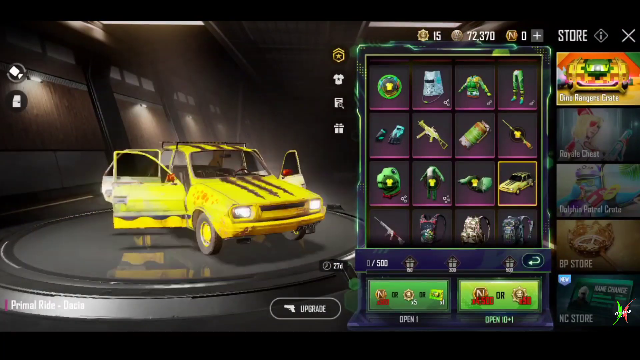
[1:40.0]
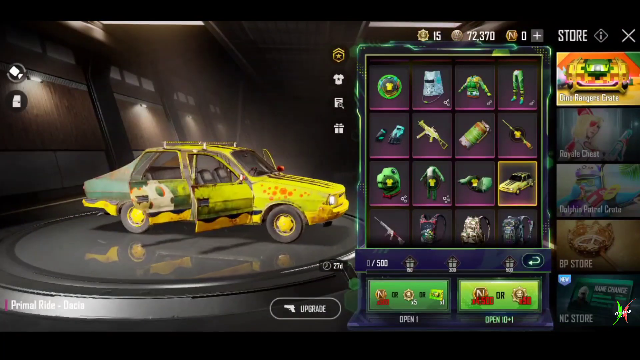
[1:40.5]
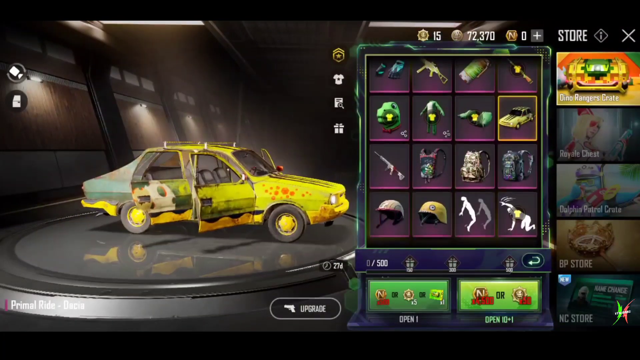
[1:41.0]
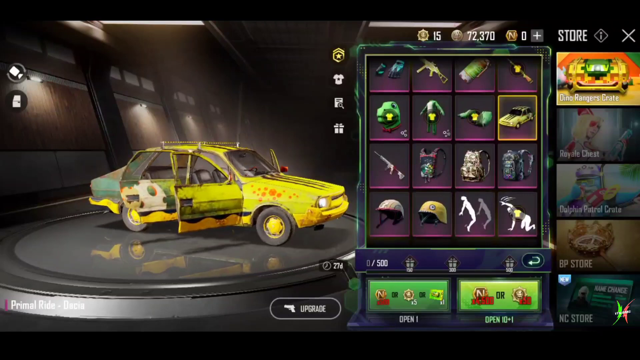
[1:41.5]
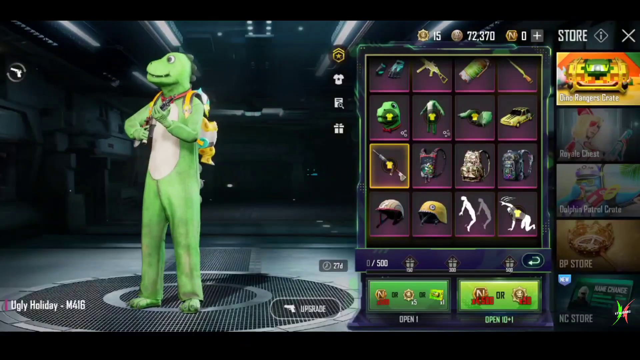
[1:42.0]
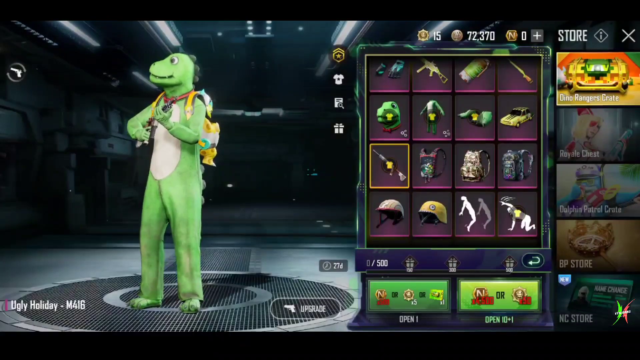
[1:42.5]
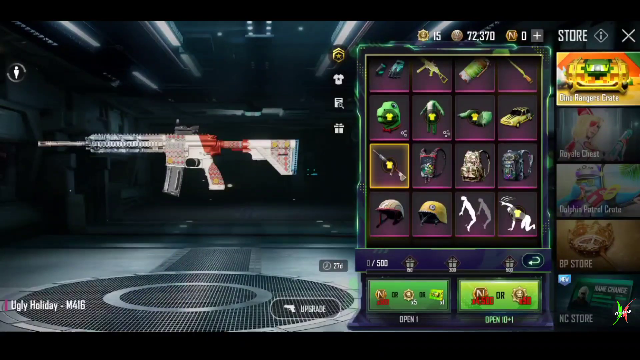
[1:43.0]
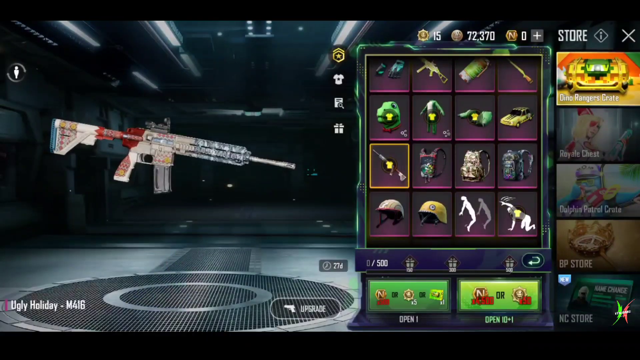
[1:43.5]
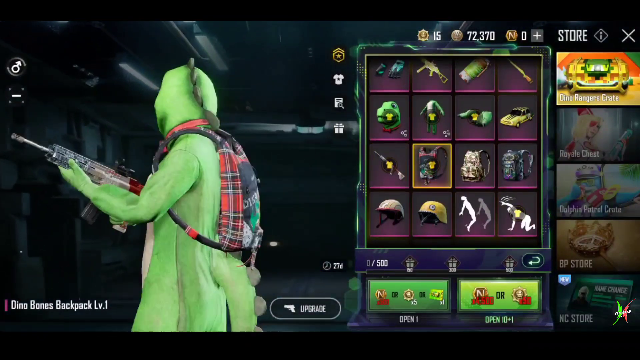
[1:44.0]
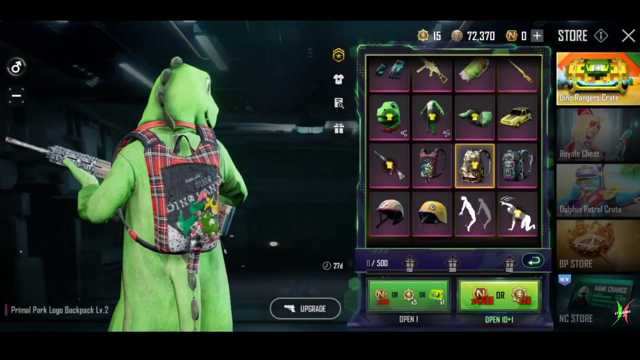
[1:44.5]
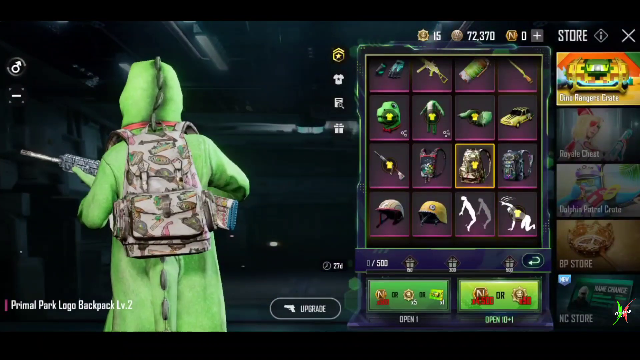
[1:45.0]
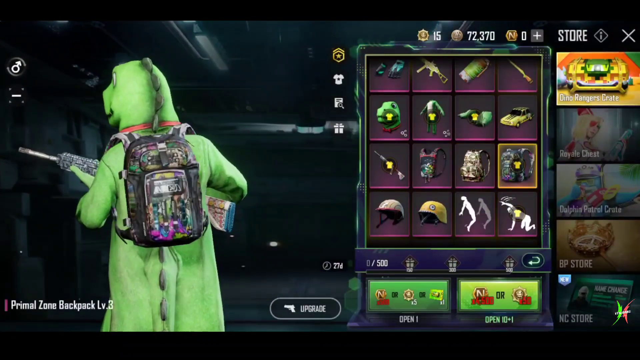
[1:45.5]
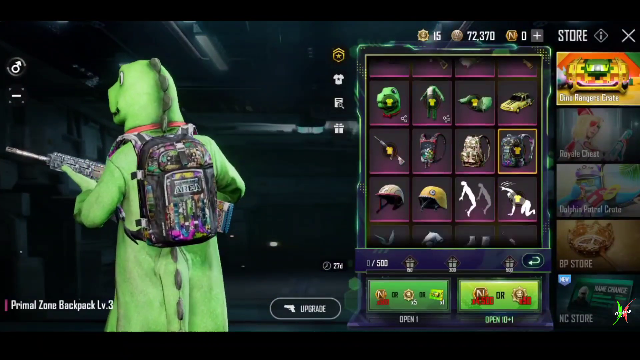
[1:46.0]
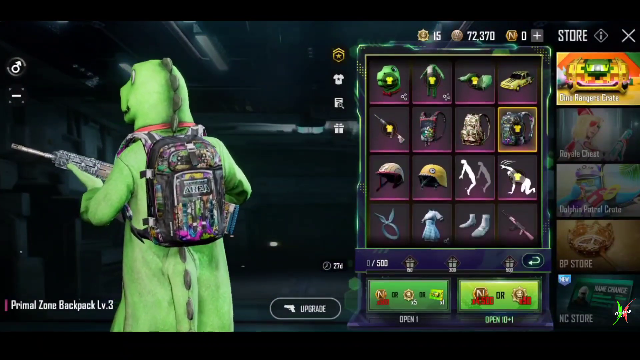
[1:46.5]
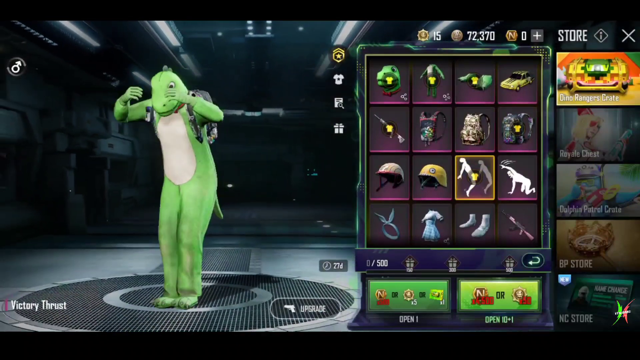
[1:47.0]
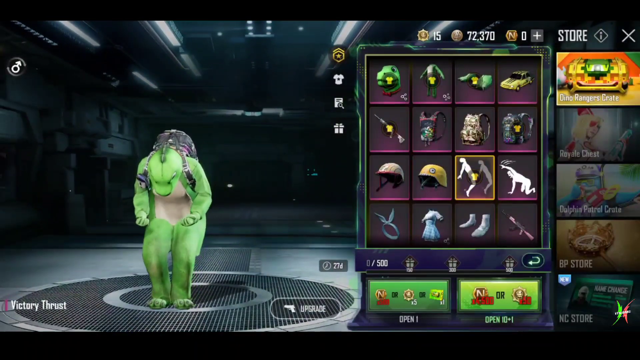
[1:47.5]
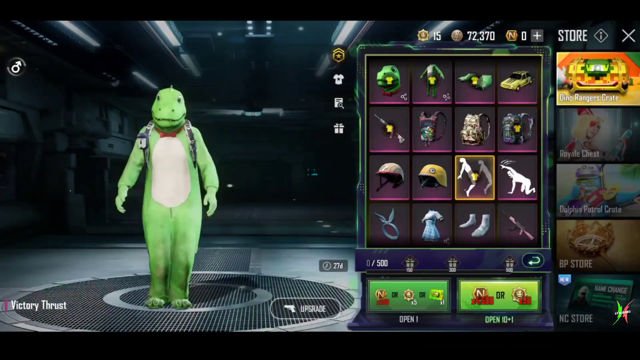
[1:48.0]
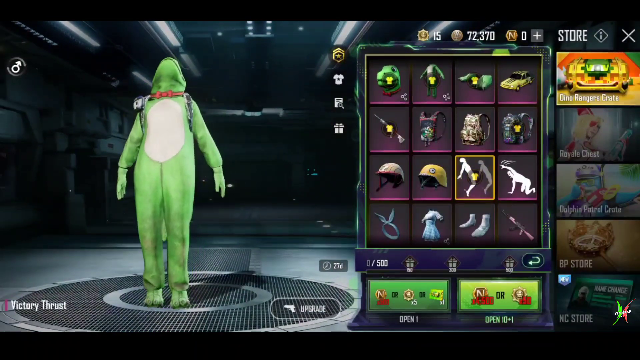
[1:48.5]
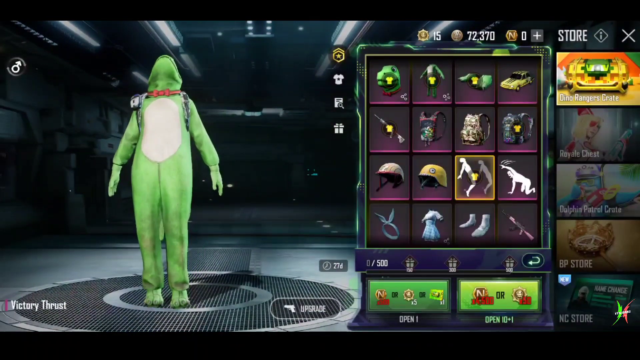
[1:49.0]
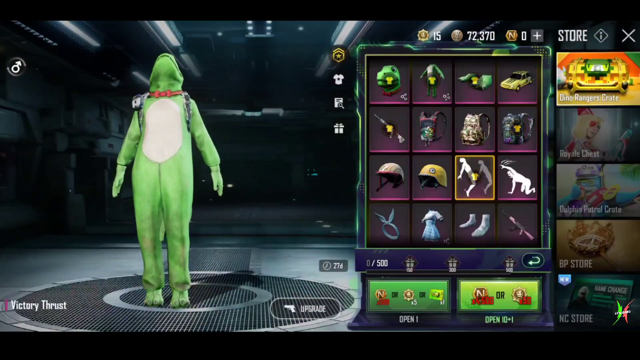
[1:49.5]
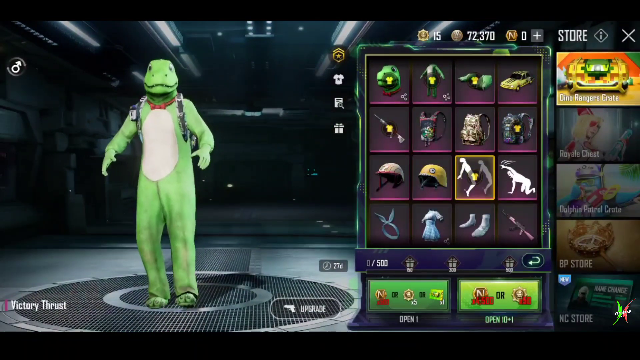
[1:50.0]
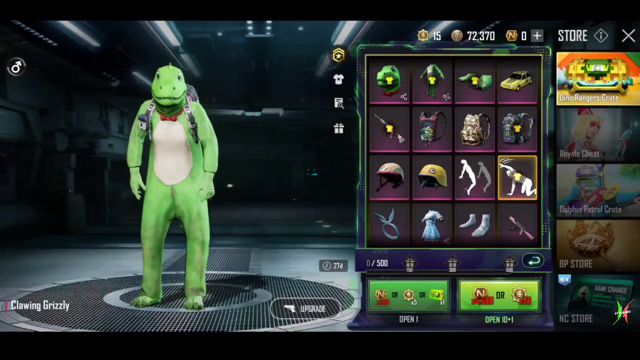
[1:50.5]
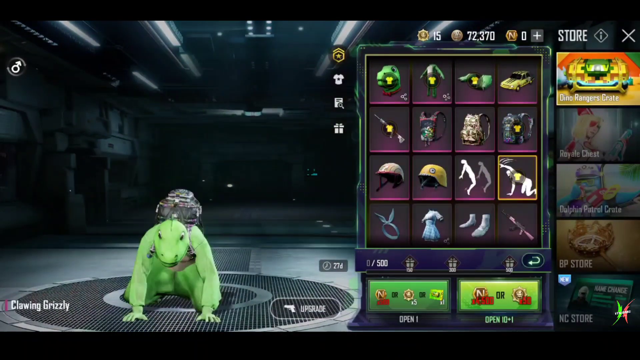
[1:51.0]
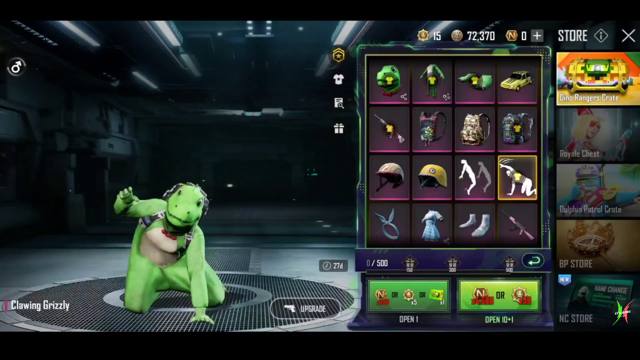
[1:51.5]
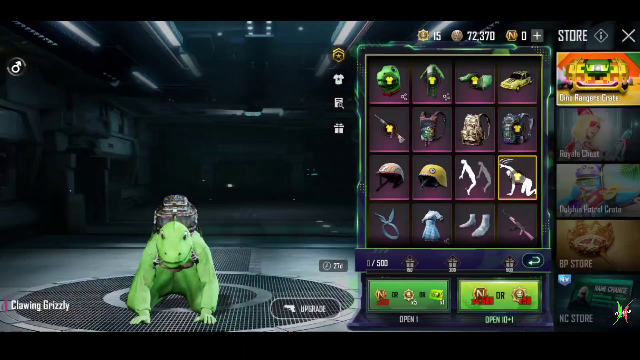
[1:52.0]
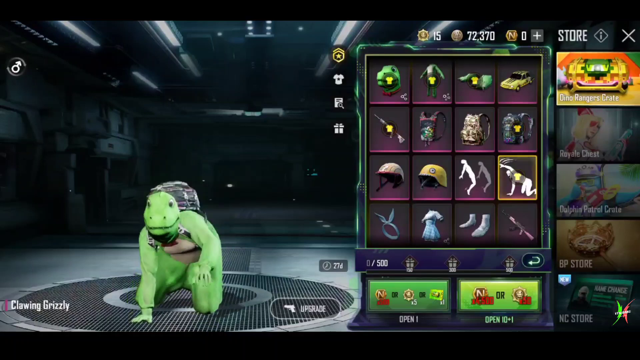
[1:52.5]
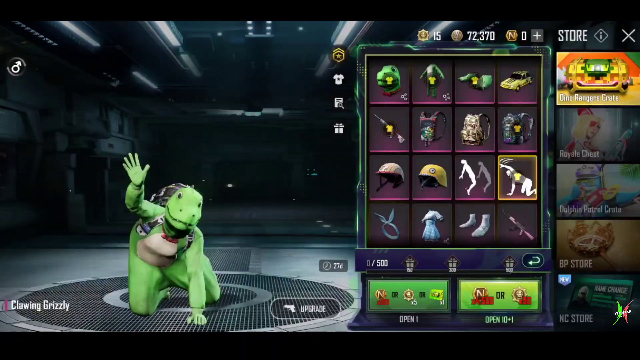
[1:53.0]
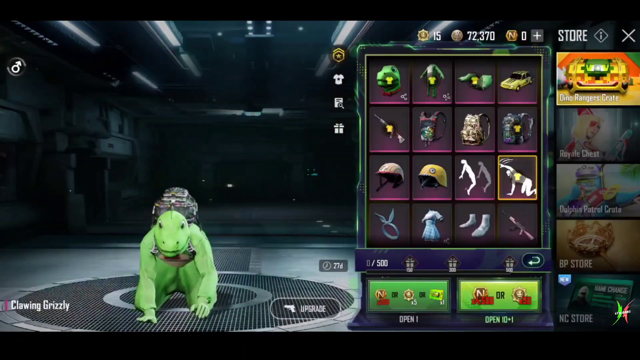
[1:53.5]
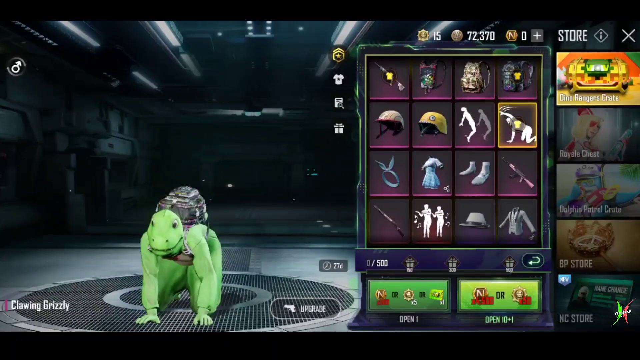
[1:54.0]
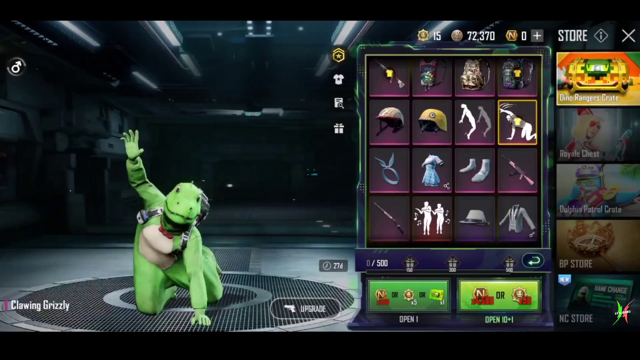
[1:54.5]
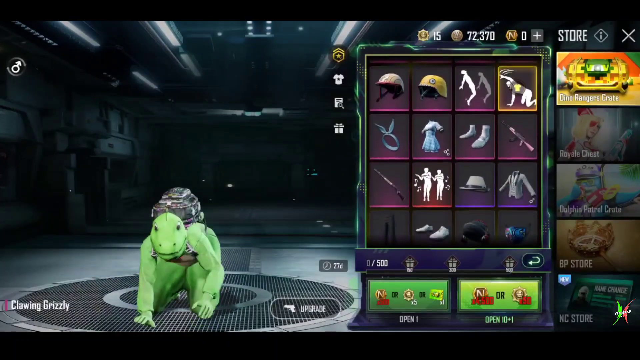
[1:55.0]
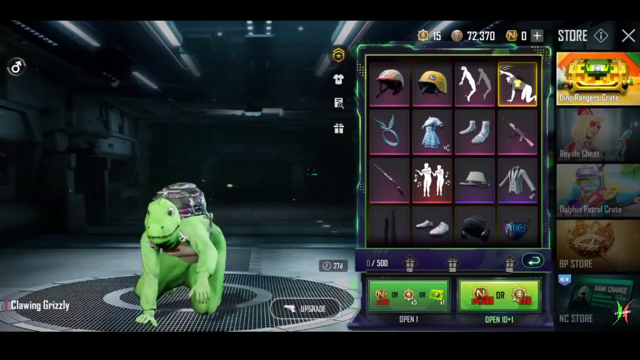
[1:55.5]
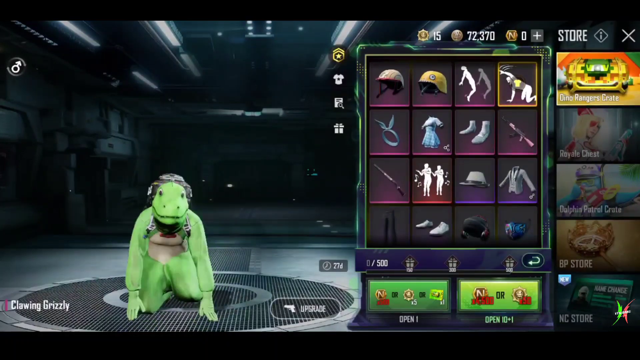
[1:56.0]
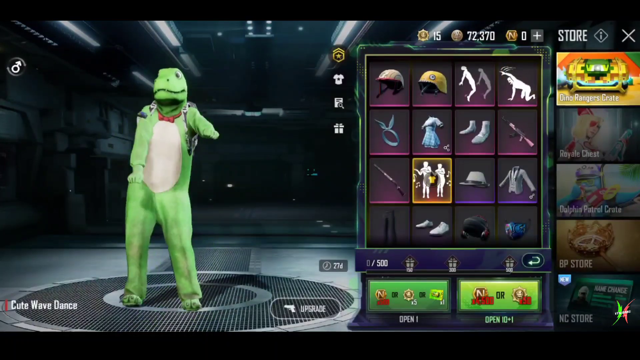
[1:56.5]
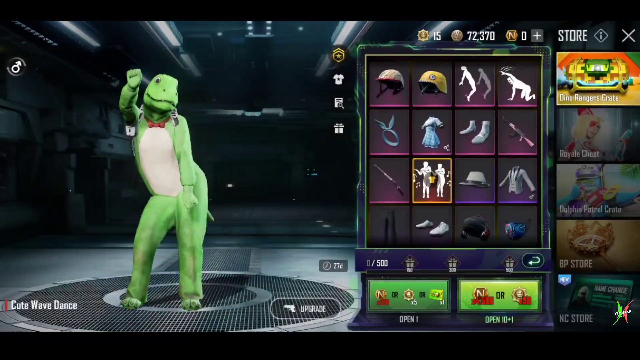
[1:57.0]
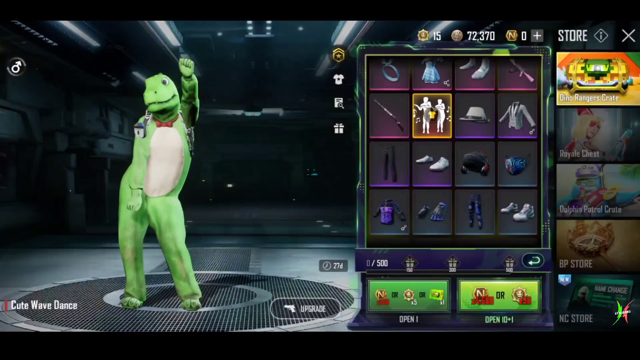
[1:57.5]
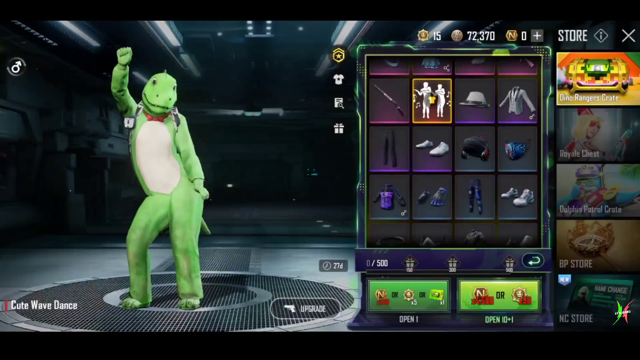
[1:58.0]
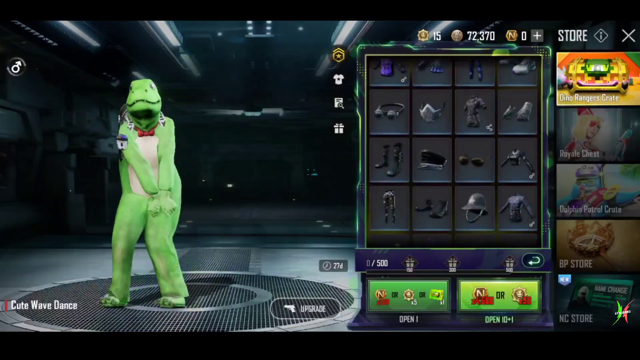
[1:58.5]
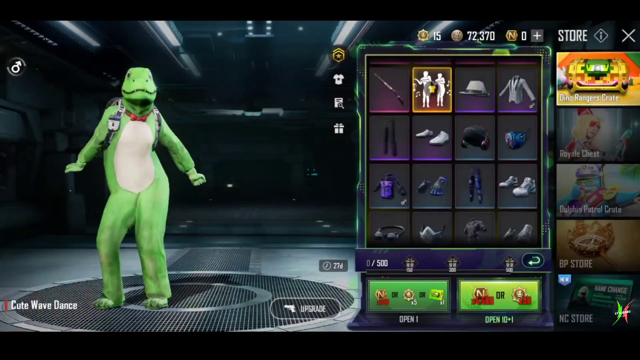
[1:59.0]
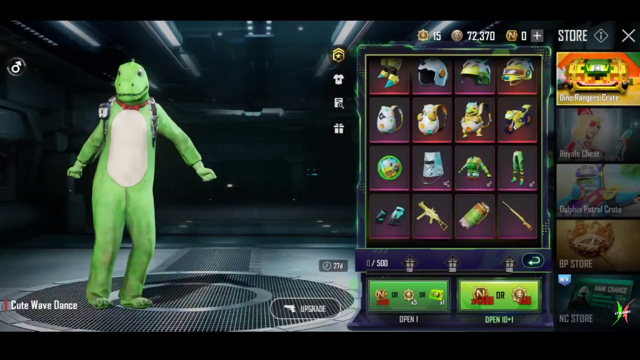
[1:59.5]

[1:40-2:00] A dinosaur car cosmetic is shown, a sedan with an egg on what appears to be the back door. The rims appear to be yellow, and the body has scaly-like paint that is more yellowish-orange at the front and becomes green-blue toward the middle. Next, a character in a full-body dinosaur suit is shown, looking similar to Yoshi but friendlier, with a big smile. The body is green with a white stomach, and the dinosaur appears to have three toes. The dinosaur suit appears to be holding or wielding a gun. The character then performs an emote, crawling and throwing its hands as if crawling and scratching toward the viewer, and then does what is considered "the monkey," swinging its arms up and down while bending its legs.